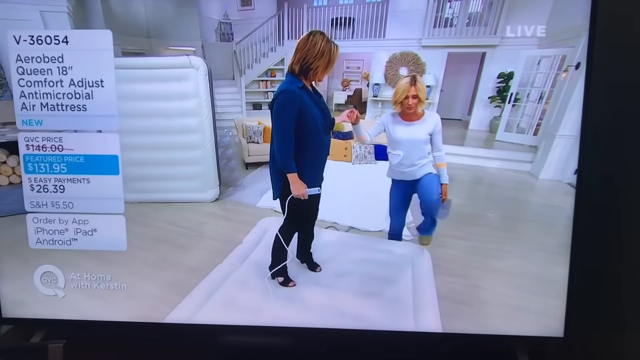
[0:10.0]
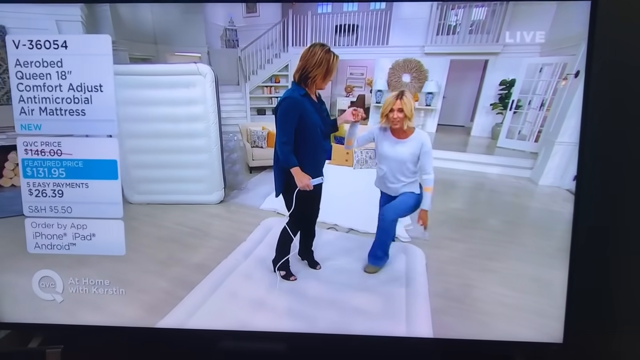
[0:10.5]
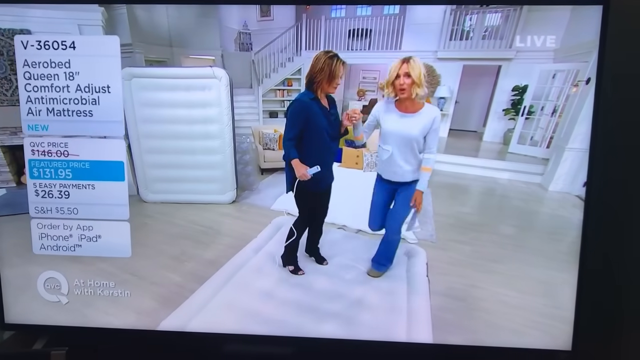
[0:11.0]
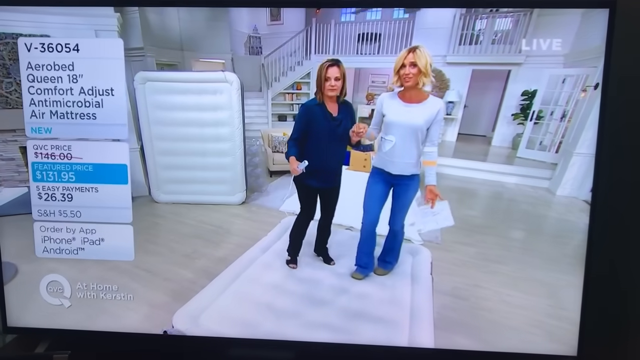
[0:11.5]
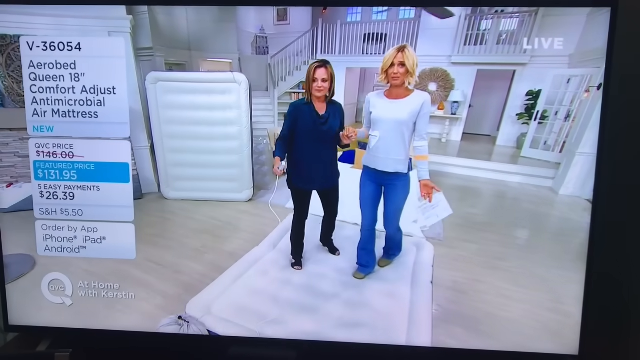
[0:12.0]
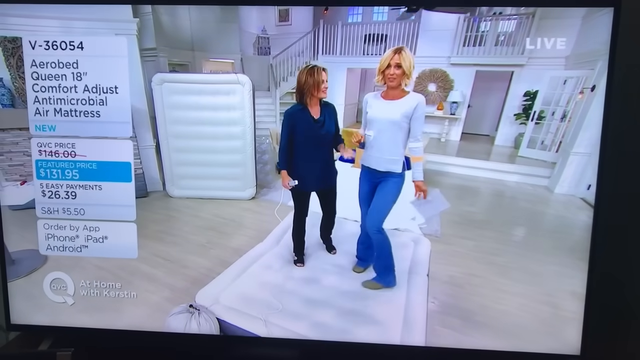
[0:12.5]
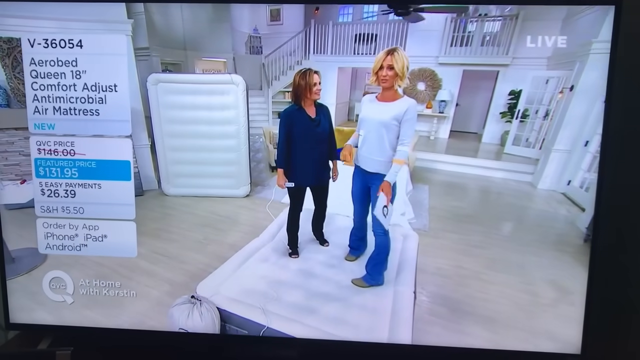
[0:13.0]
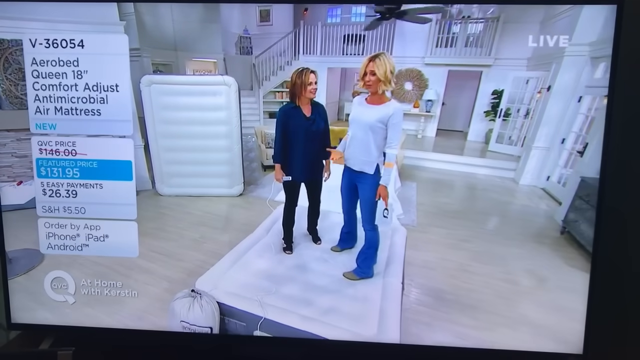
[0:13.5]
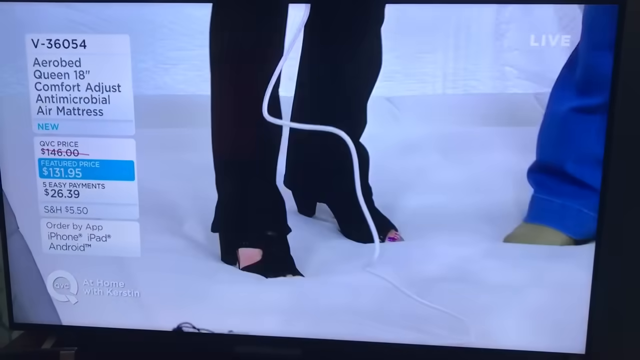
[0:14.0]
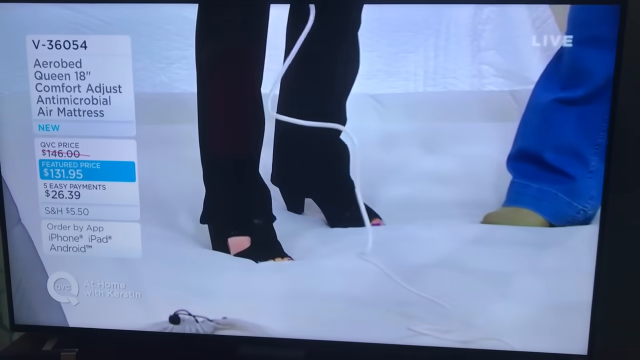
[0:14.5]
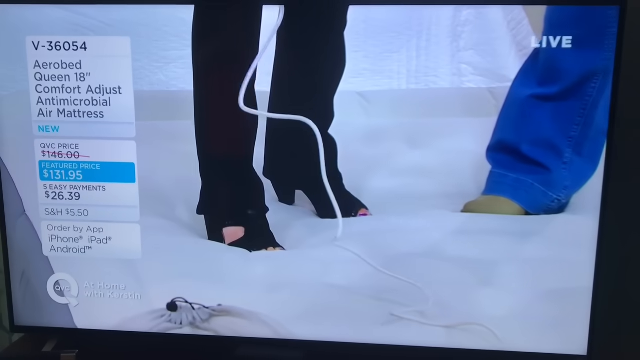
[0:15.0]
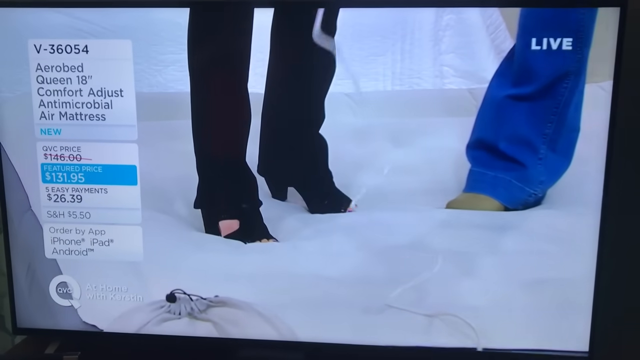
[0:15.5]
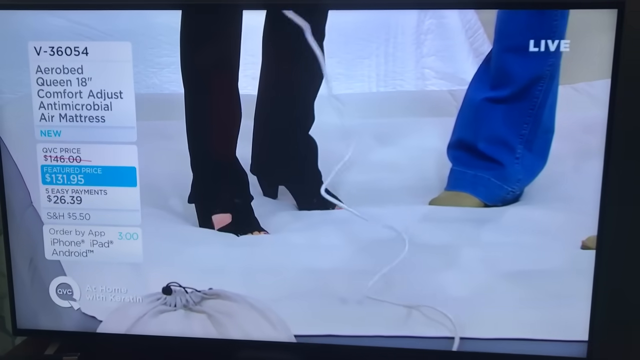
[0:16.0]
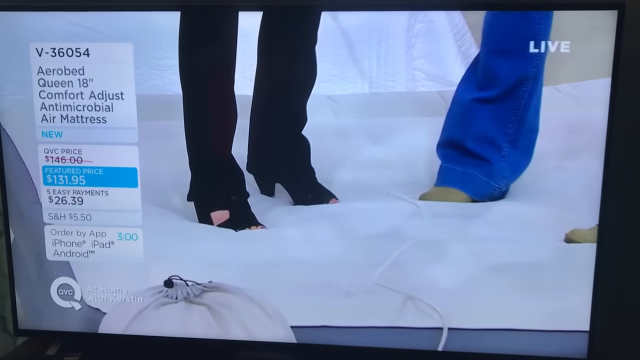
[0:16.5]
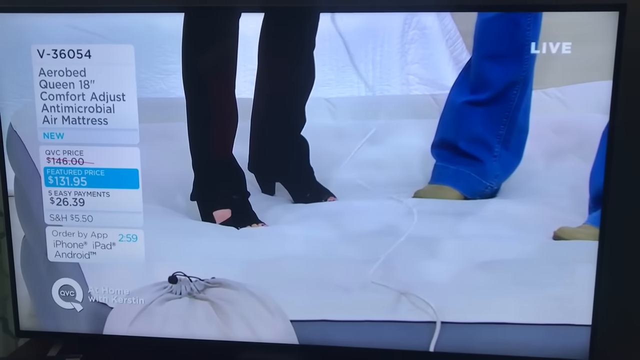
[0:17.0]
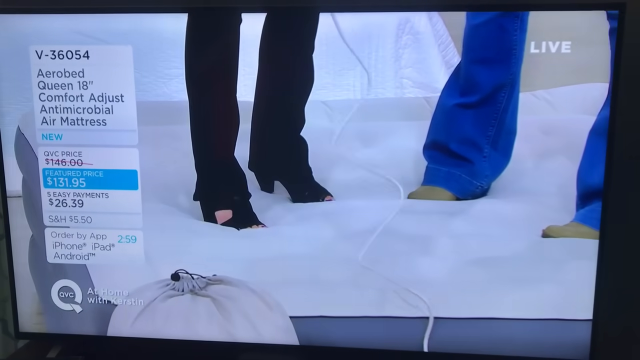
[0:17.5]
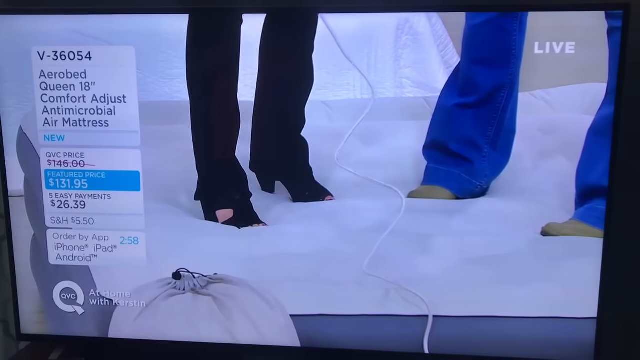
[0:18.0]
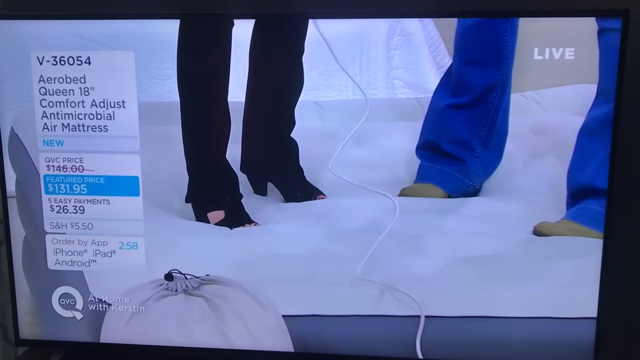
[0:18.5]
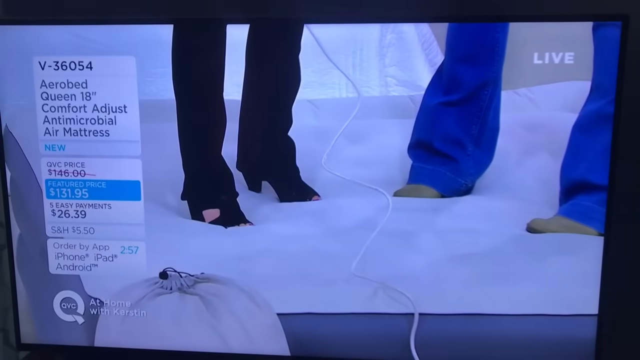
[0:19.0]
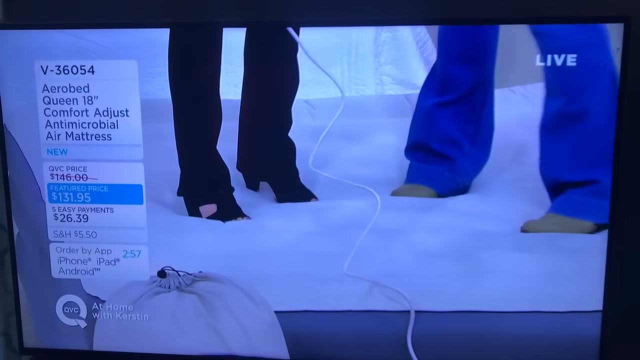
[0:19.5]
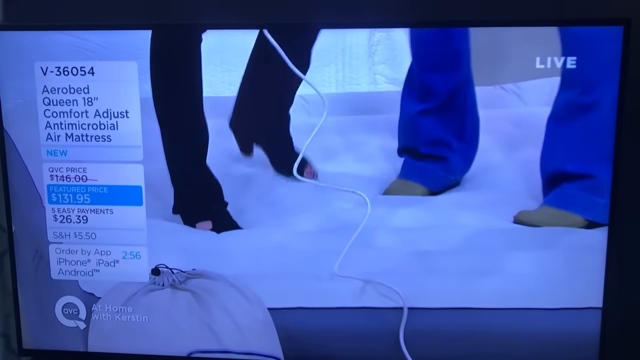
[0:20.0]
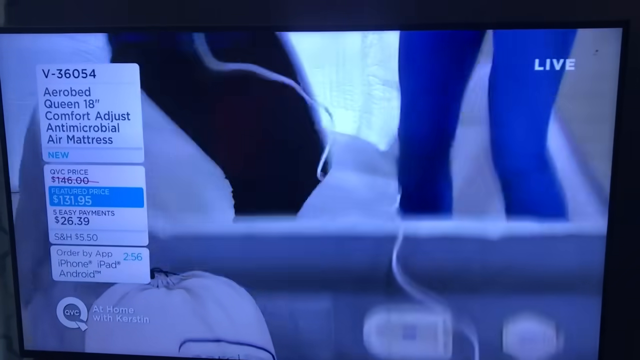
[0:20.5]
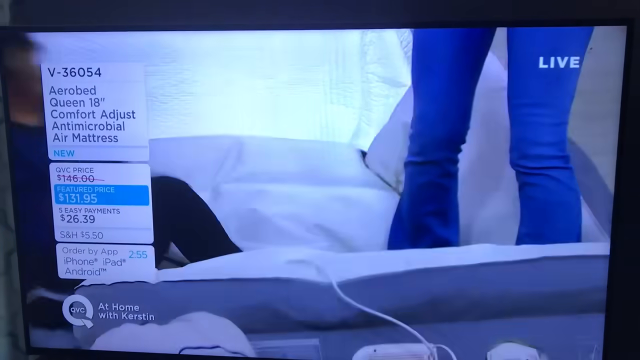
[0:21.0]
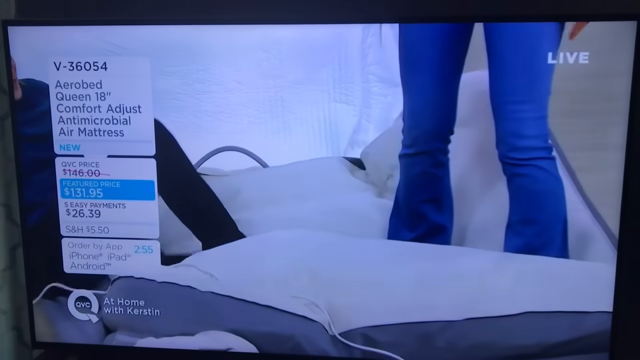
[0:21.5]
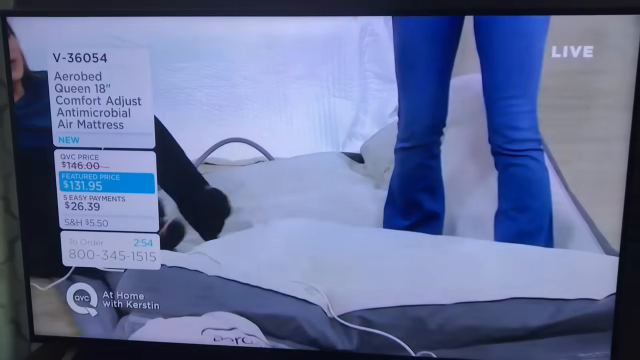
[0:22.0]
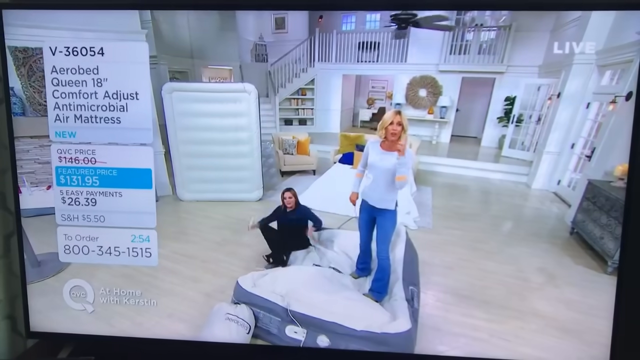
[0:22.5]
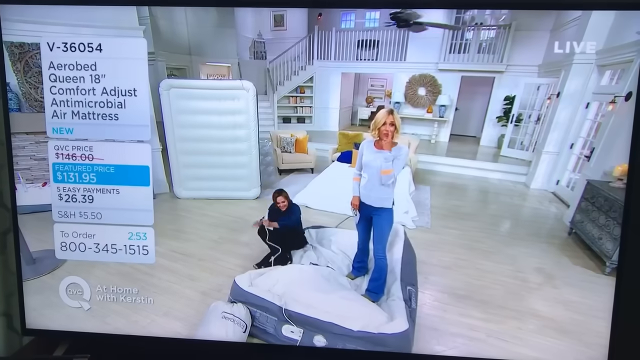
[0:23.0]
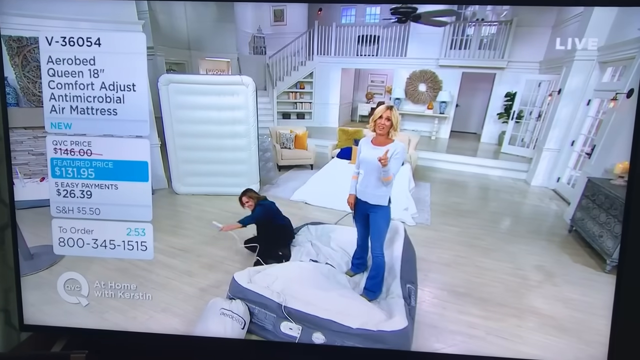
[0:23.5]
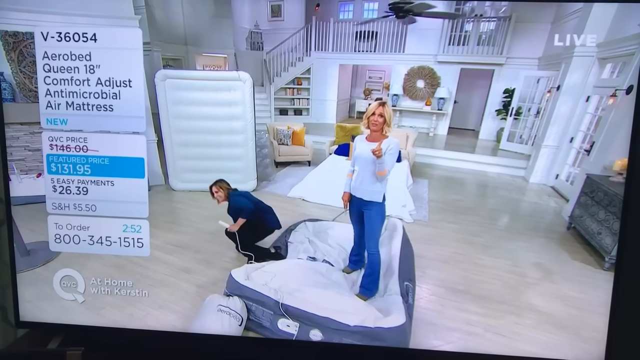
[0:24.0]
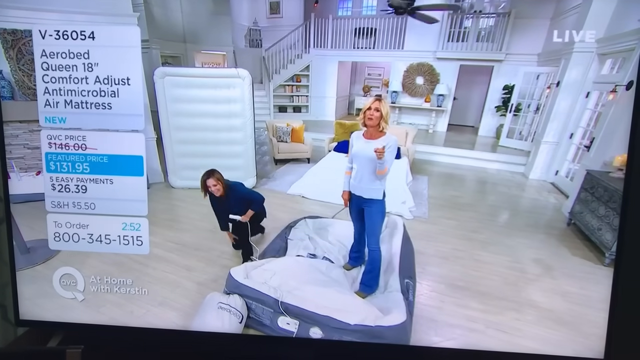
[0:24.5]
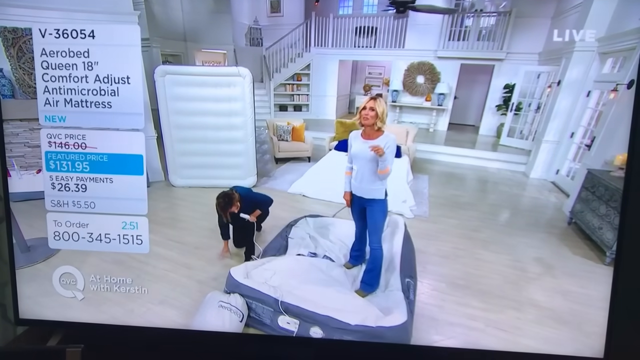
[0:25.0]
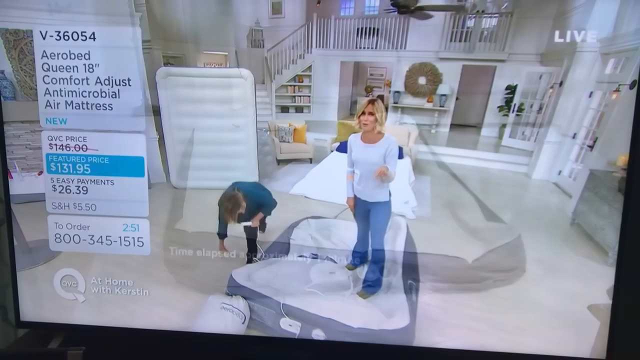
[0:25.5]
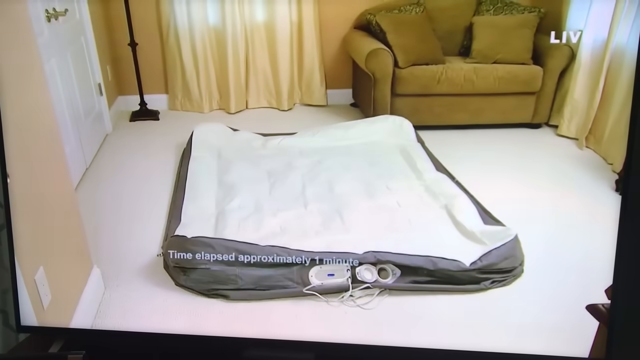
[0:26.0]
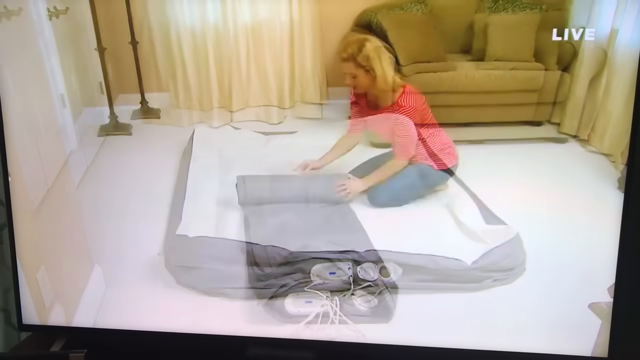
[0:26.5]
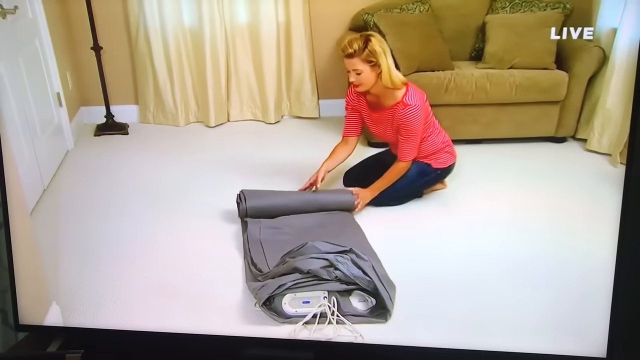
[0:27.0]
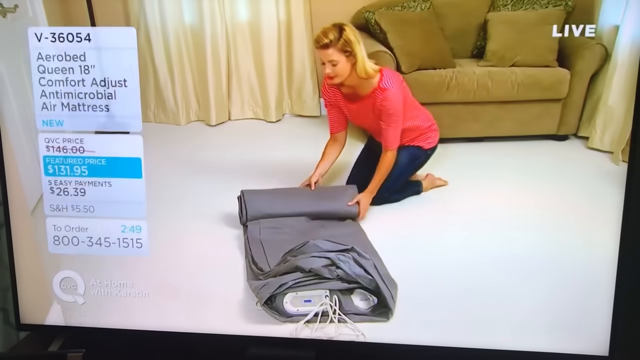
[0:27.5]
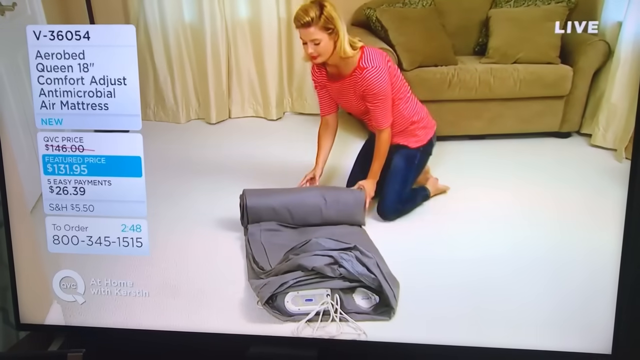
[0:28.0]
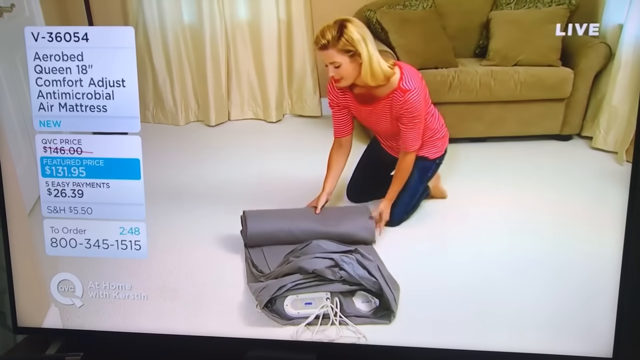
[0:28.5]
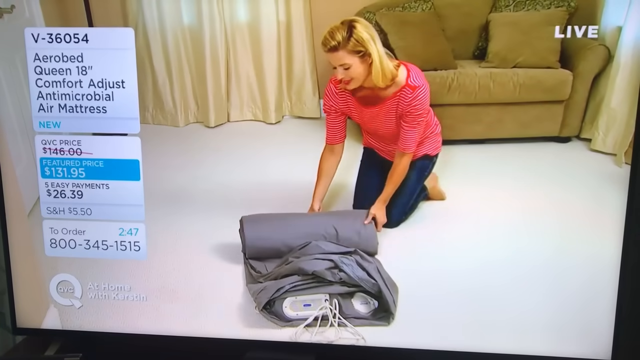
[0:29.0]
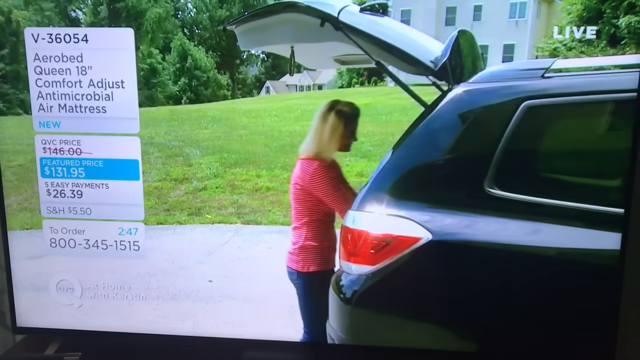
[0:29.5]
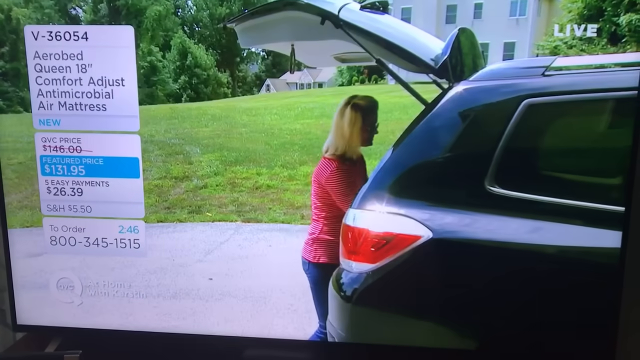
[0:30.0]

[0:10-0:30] Two women, one or both of them hosts, display an air mattress on QVC, a shopping network on TV and online. They are demonstrating an AeroBed, and they are now on it without the bedding of a white comforter and cushions. Wearing their shoes and fully clothed, they stand up on it to show that it can handle the weight of both of them. Suddenly the AeroBed pops and breaks, and the woman on the left falls off; the broadcast is live. The price shown is "$131.95", with shipping and handling of "$5.50". The left side of the screen also shows that viewers can order using the QVC app, which can be used on the iPhone, iPad or Android. In the lower left corner is the QVC logo, a round white circle with the letters QVC in the center, with the Q shown with a little hook in its lower right corner. At the end, there is an outdoor shot of a woman outside.